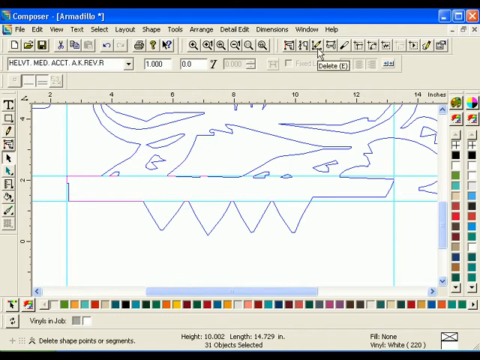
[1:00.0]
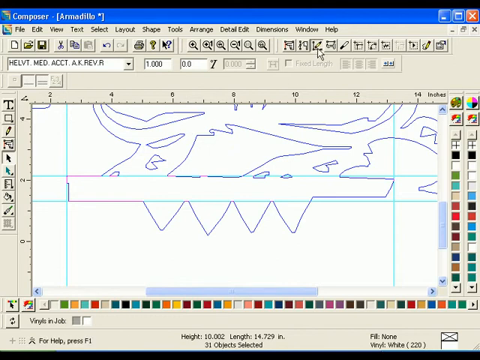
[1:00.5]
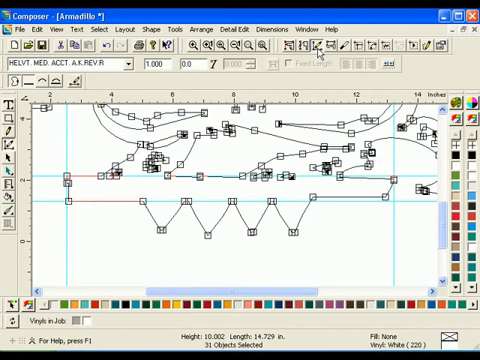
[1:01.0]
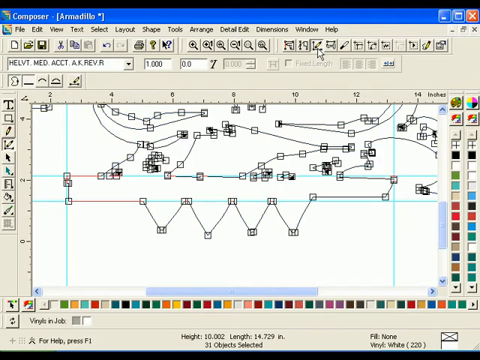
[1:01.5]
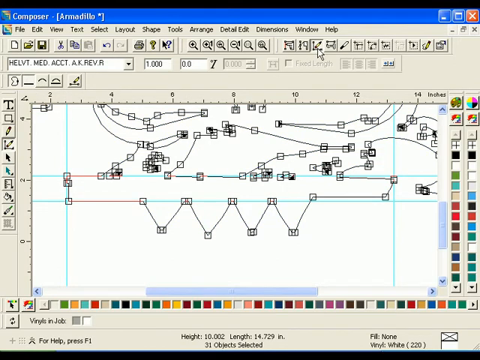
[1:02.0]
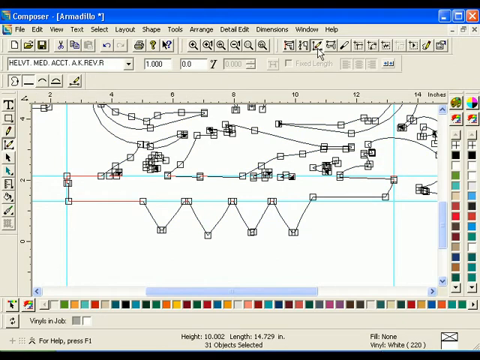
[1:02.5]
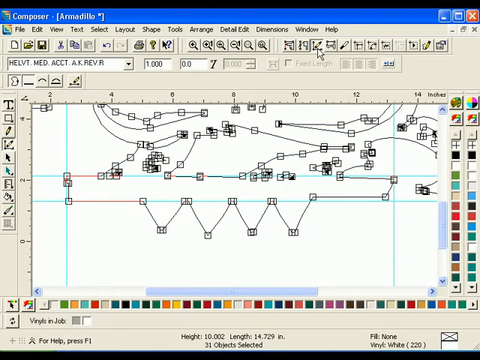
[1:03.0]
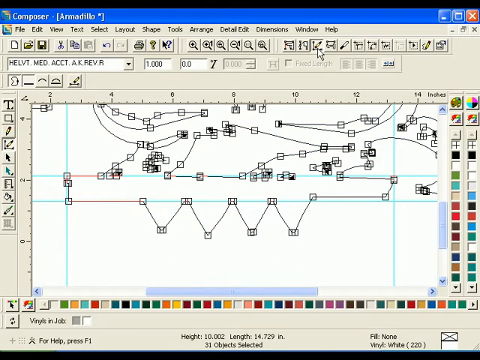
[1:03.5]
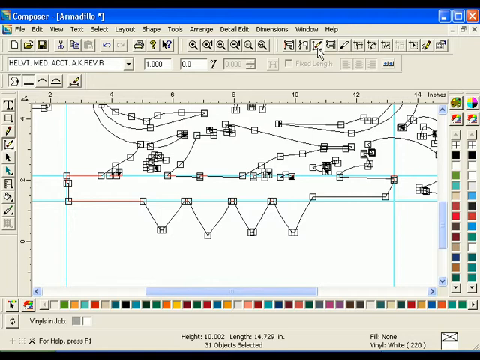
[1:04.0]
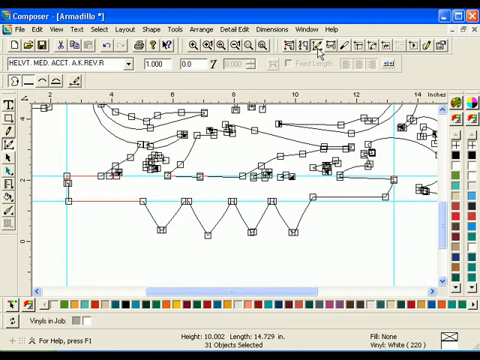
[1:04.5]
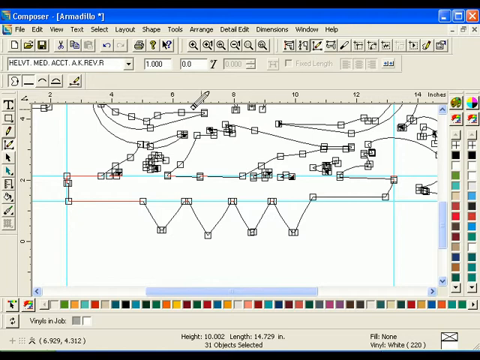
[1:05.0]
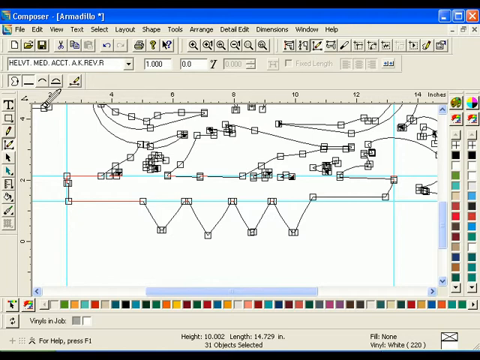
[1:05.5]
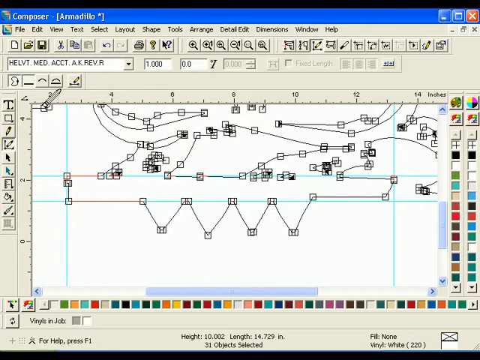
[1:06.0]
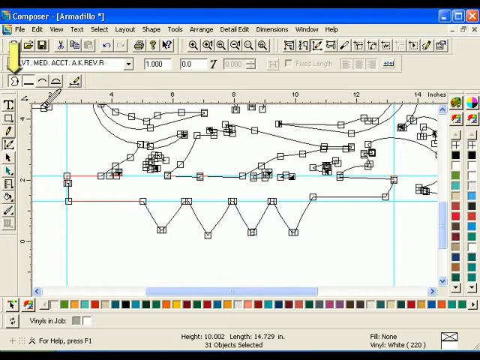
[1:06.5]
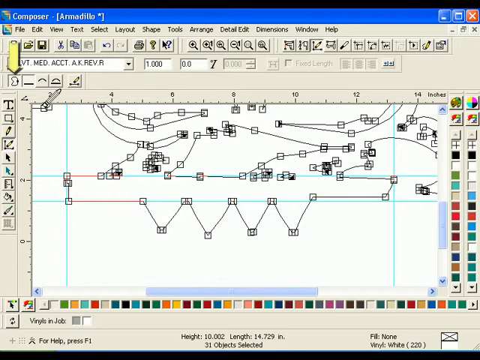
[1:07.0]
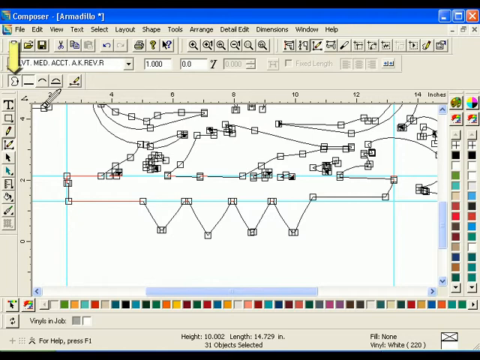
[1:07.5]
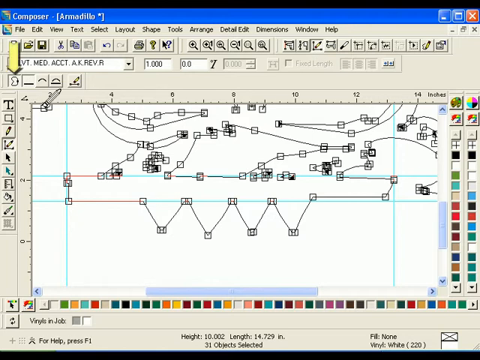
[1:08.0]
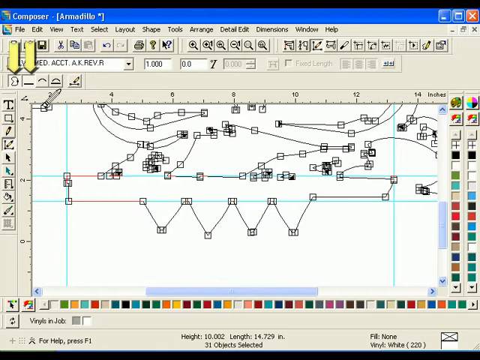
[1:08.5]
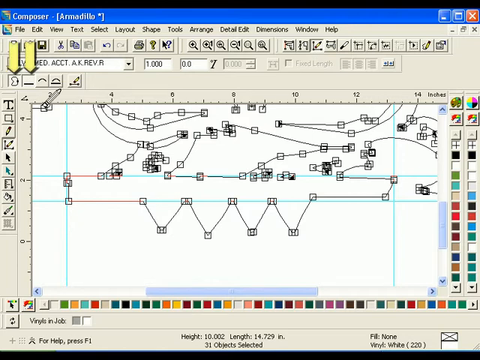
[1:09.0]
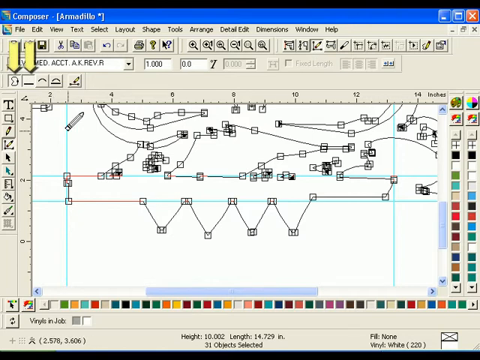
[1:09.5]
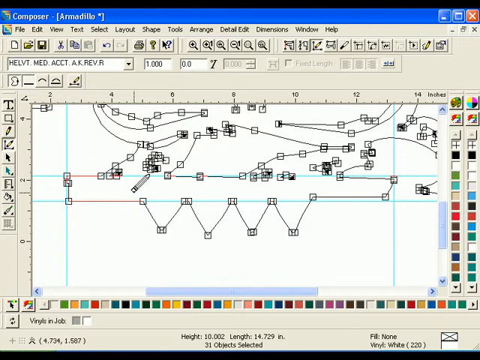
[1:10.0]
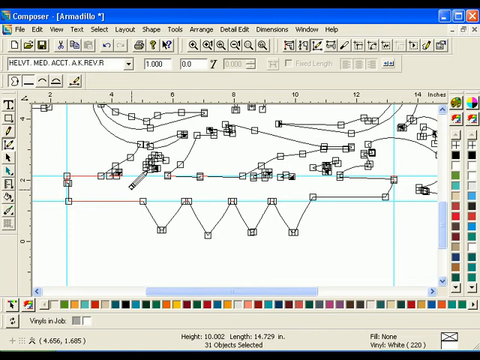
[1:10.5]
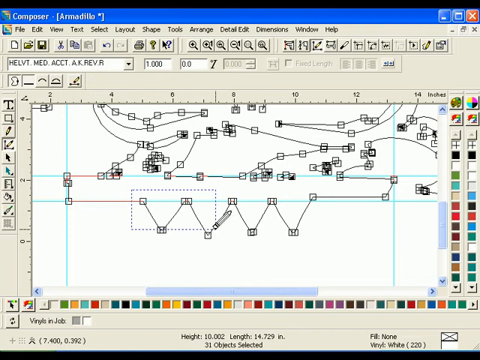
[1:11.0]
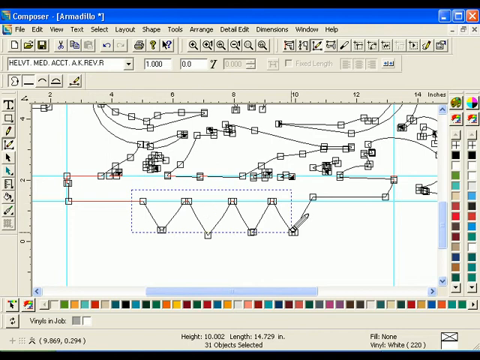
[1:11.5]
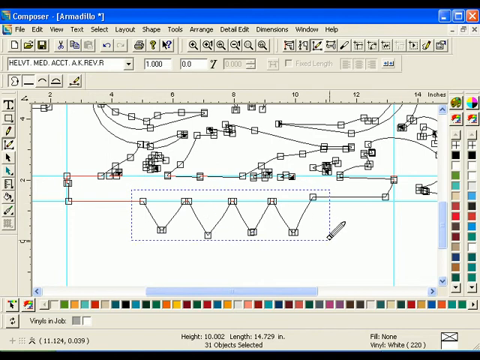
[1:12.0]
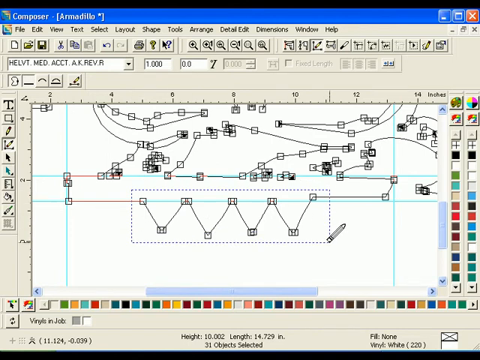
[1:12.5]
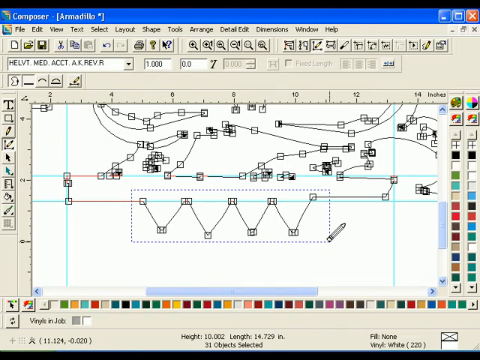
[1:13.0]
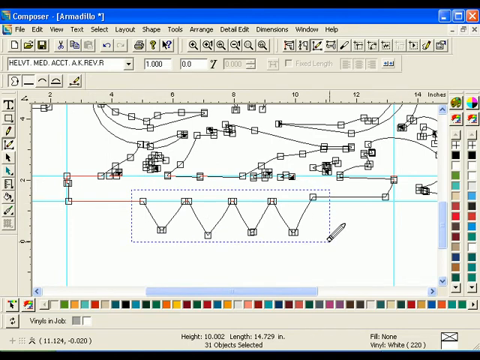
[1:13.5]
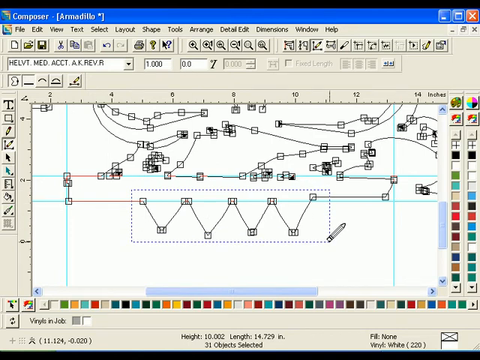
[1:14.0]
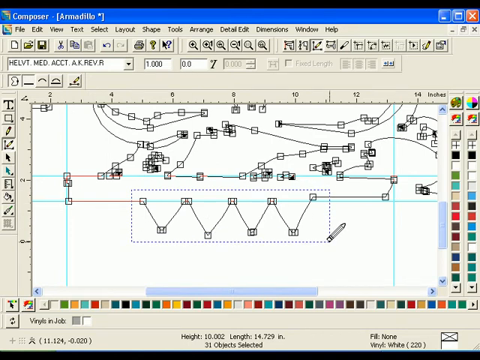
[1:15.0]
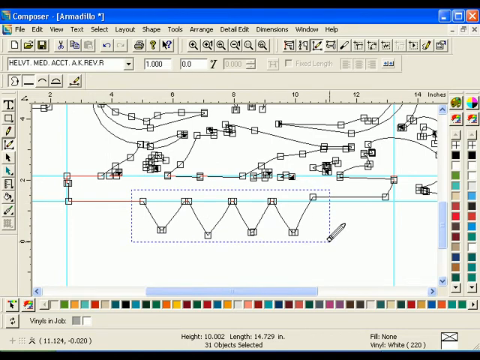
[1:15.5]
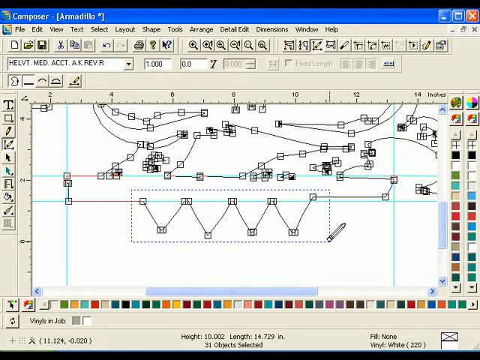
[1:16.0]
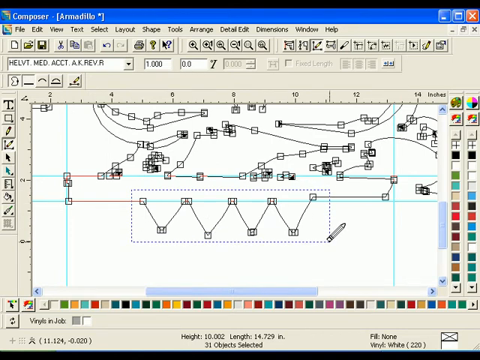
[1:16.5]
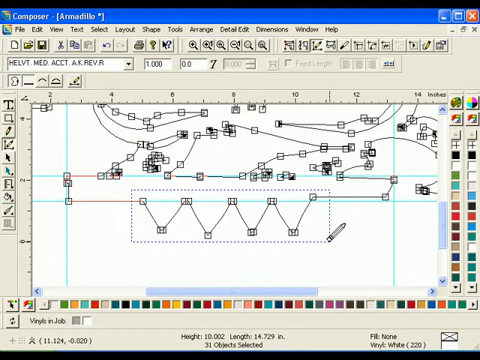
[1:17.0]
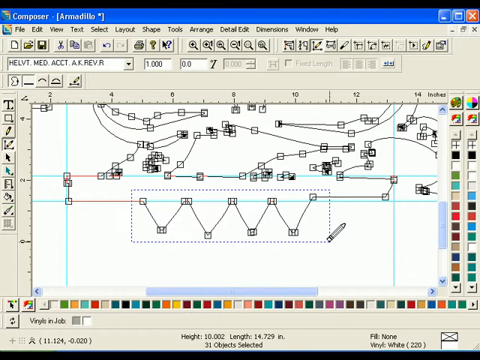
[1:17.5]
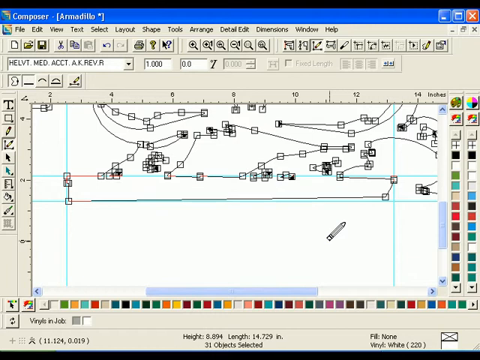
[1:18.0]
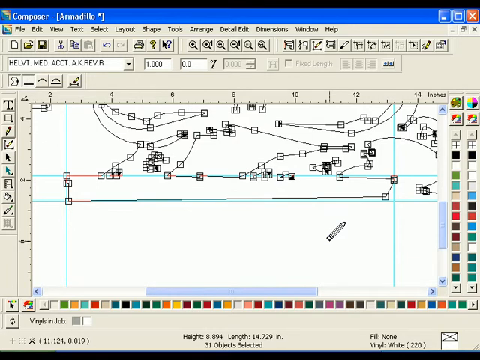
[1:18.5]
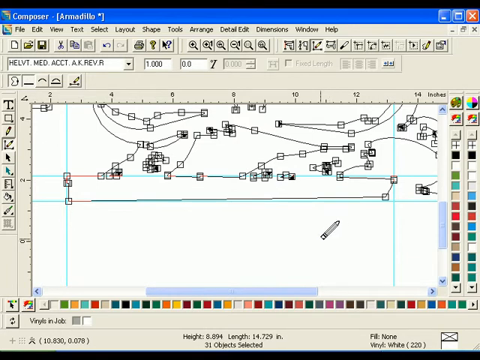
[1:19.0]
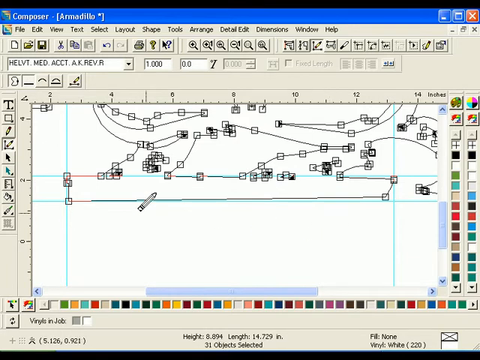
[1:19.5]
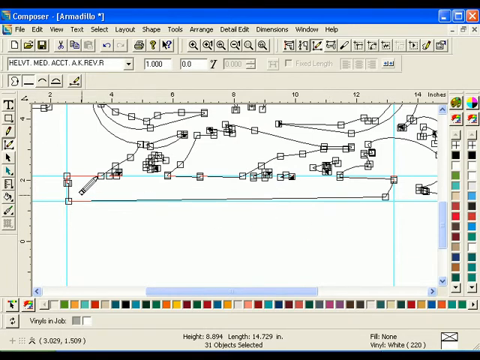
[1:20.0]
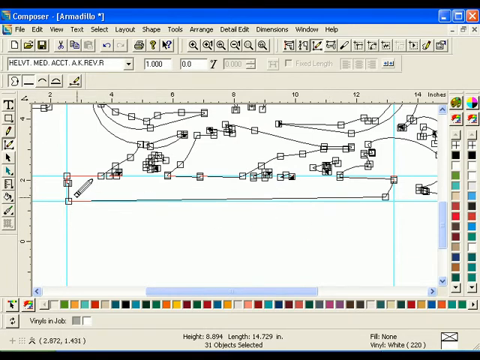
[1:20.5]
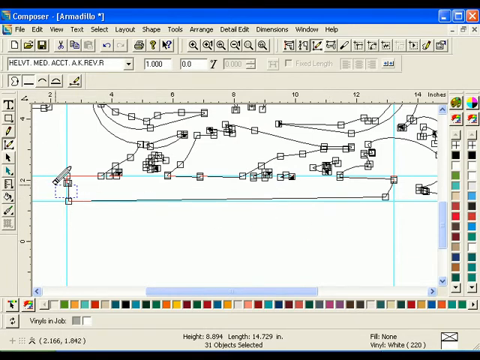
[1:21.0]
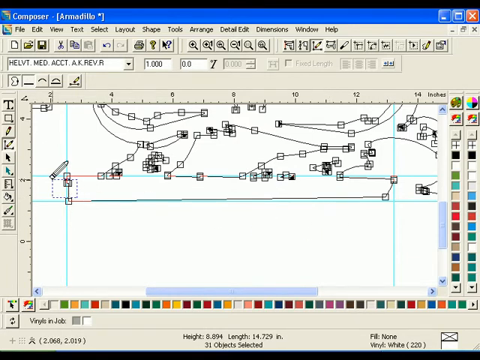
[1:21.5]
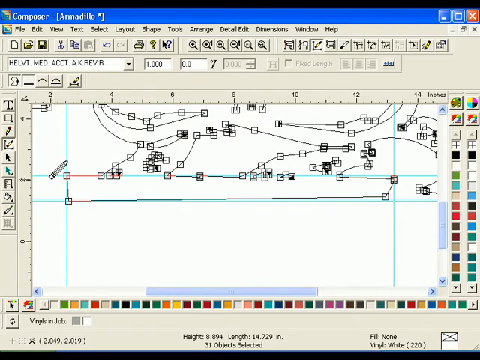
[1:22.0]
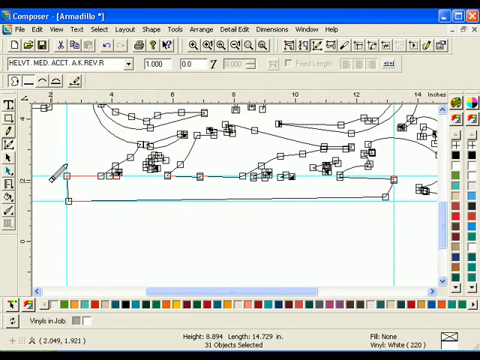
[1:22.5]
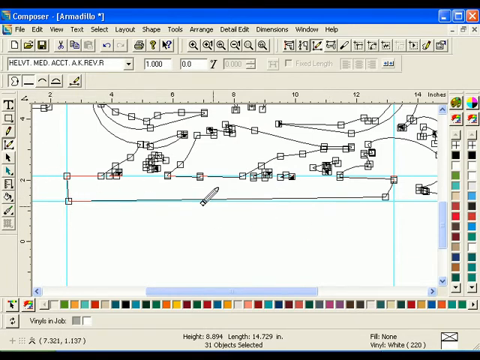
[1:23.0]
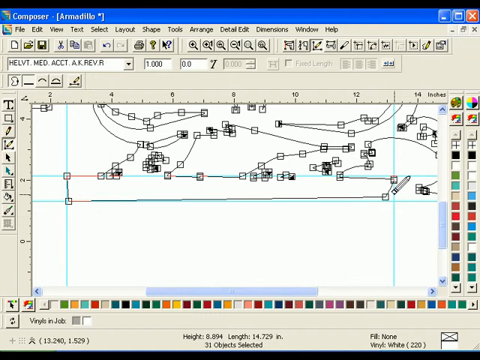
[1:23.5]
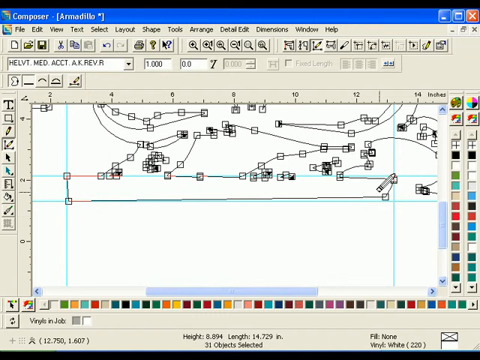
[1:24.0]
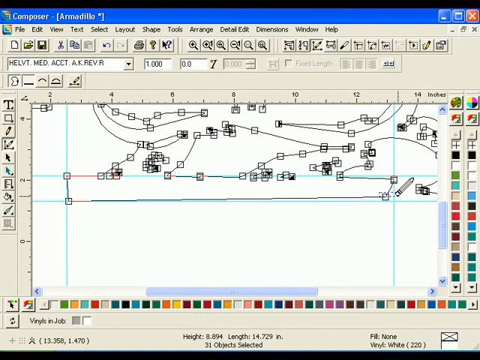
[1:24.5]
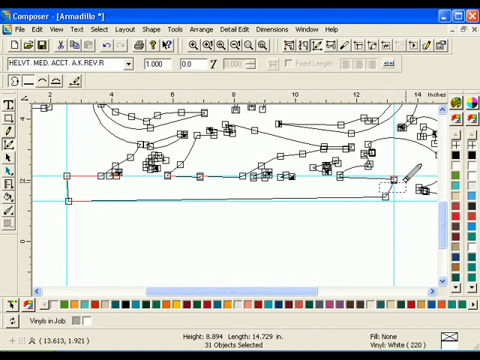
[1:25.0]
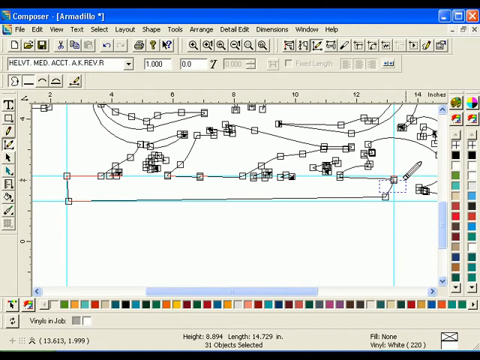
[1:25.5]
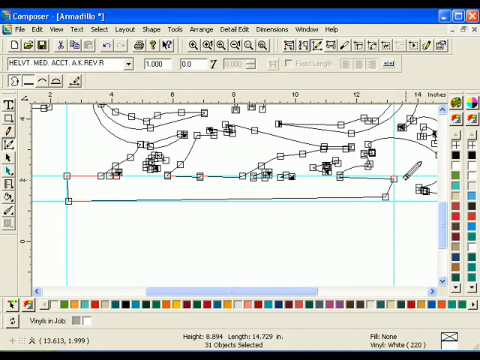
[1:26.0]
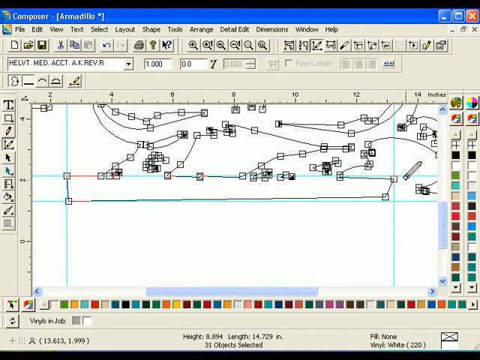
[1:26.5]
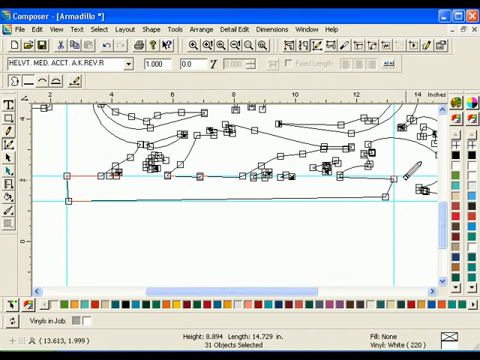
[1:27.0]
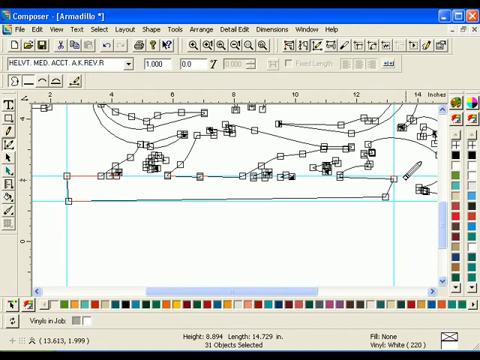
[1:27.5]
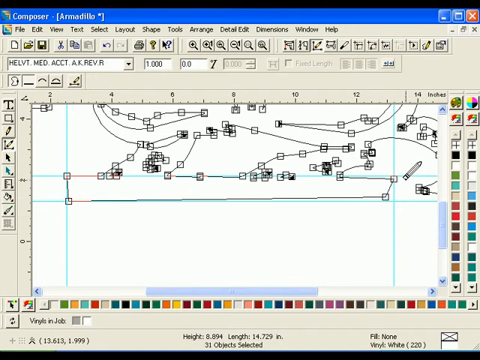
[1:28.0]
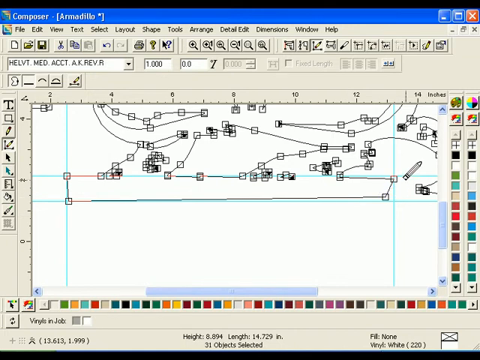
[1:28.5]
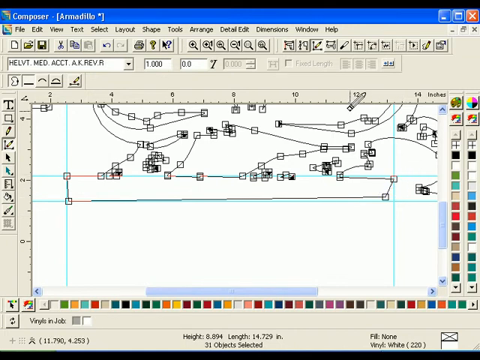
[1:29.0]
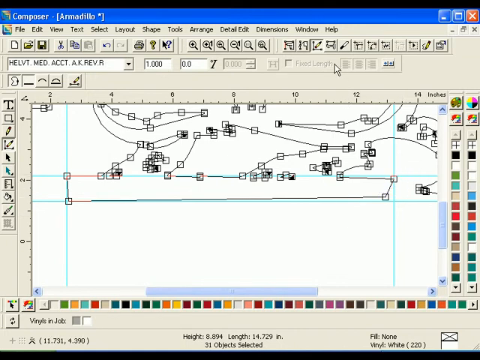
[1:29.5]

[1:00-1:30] An application that looks very similar to paint, but is not, is shown. White text at the top left reads "Composer -" and then, in parentheses, "armadillo." On the white canvas in the middle is what looks like a rectangular base with four upside-down triangles in a purple line drawing, apparently the base that an armadillo stands on. The mouse clicks a button at the top reading "Delete" with "(E)" in parentheses, whose symbol looks like a right angle with a pencil pointing at its middle. Suddenly many black squares appear all over the purple line, especially over the corners of the triangles and the base. A yellow arrow then points downward at the top left, where there are two selections that look like a blob and a horizontal line. The mouse moves down to the bottom of the base, where the four inverted triangles have many squares on their angles, and drags from the top left to the bottom right of the triangles, making a dotted purple rectangle around them. When it apparently releases, all the triangles disappear. The cursor now looks like an eraser: an inverted pencil with the eraser pointing downward. It goes to the left side of the base, where there are three squares, selects the middle one and deletes it, then goes to the bottom right of the base, selects the middle there and makes another purple square. It then moves up toward the Delete button again. The tool appears to be deleting the angles of the lines in the picture.